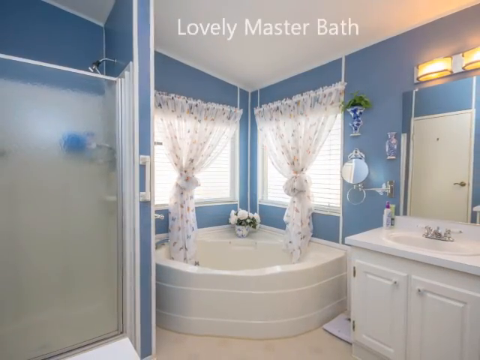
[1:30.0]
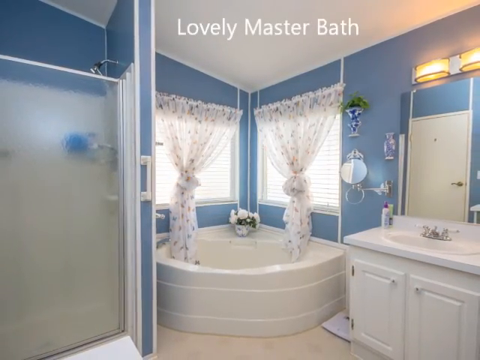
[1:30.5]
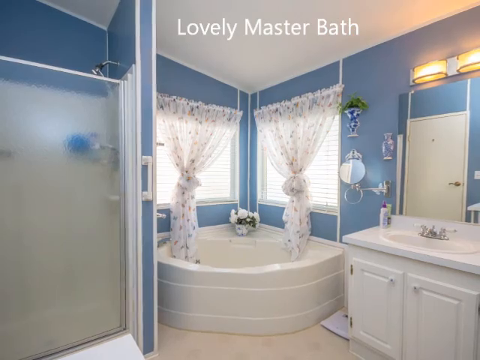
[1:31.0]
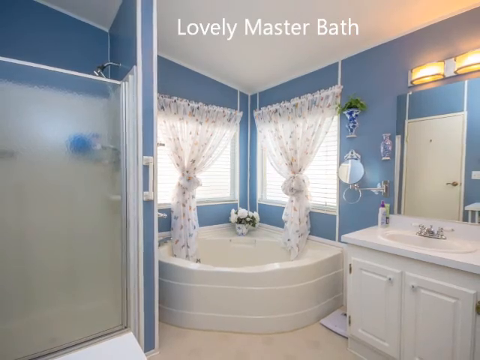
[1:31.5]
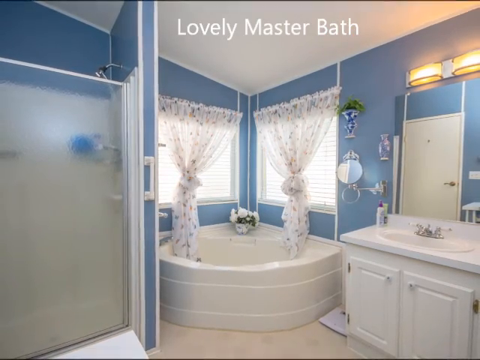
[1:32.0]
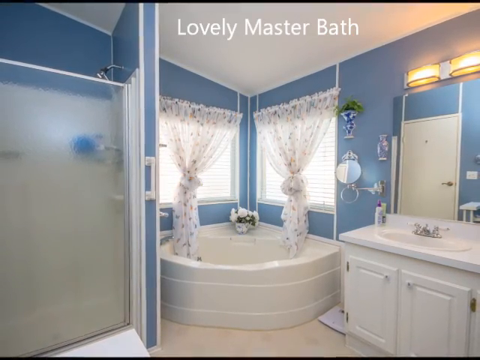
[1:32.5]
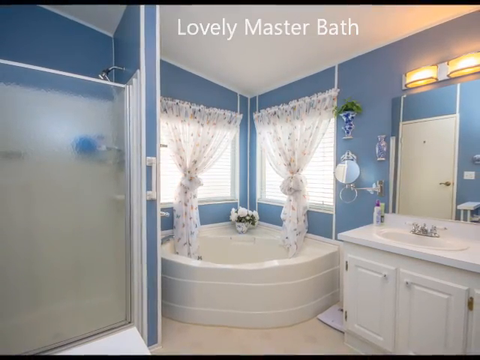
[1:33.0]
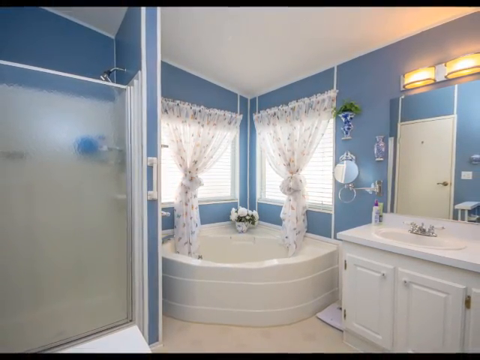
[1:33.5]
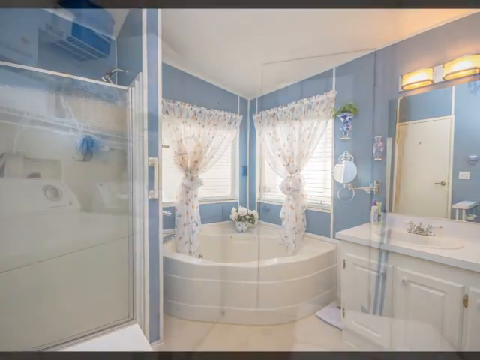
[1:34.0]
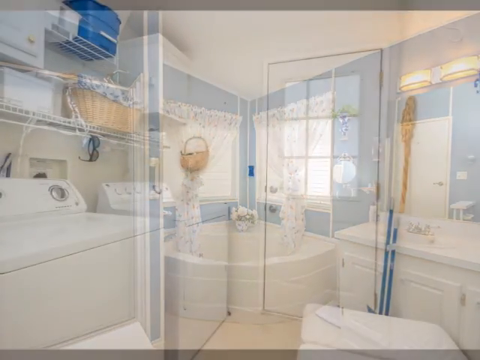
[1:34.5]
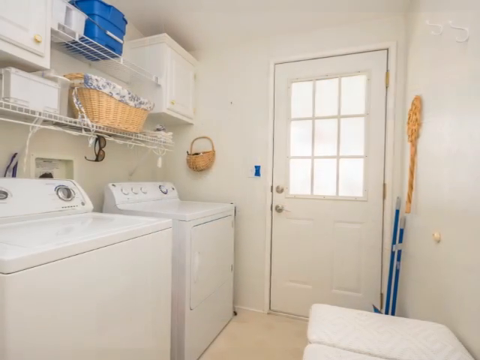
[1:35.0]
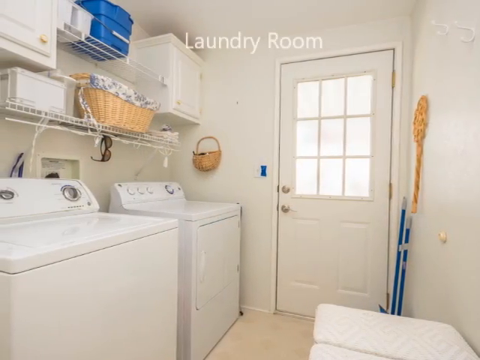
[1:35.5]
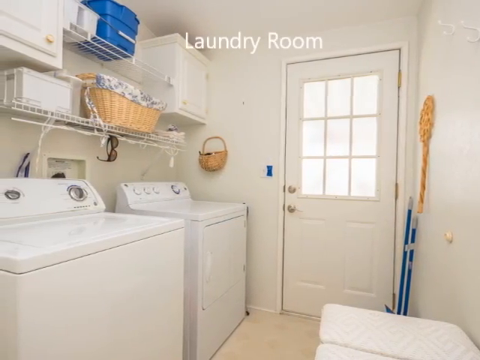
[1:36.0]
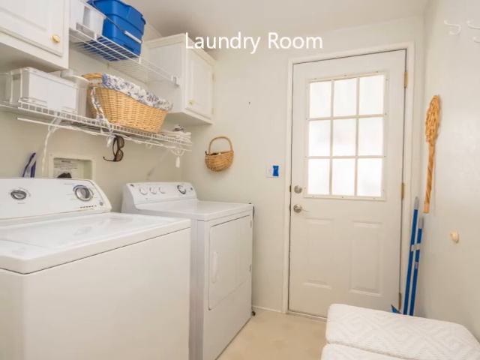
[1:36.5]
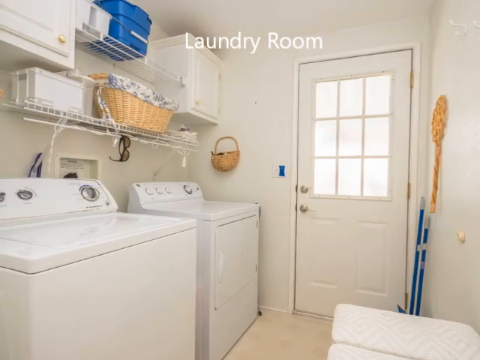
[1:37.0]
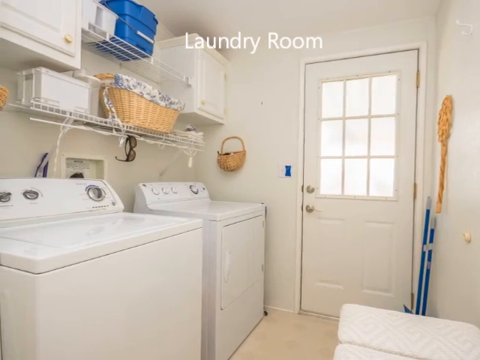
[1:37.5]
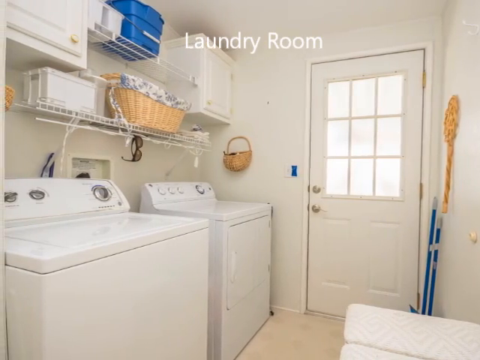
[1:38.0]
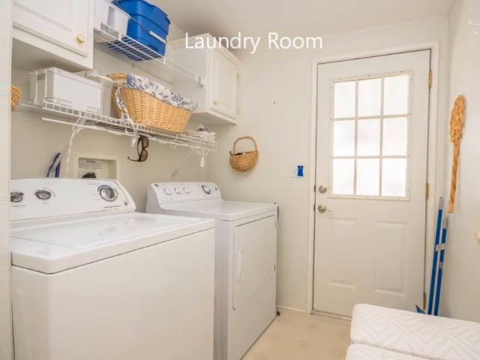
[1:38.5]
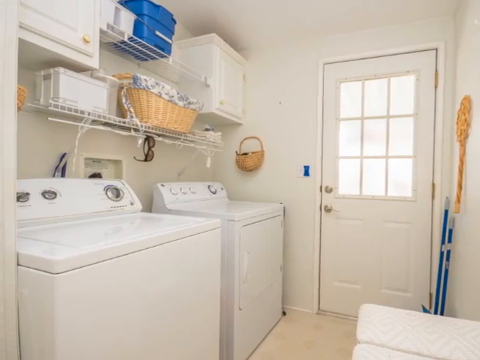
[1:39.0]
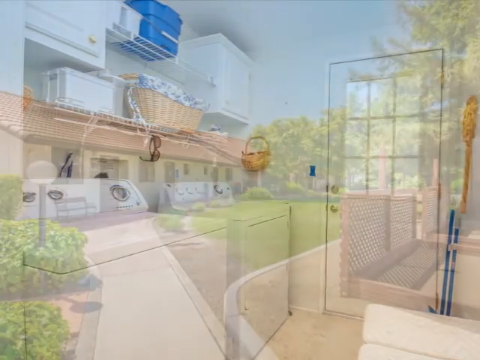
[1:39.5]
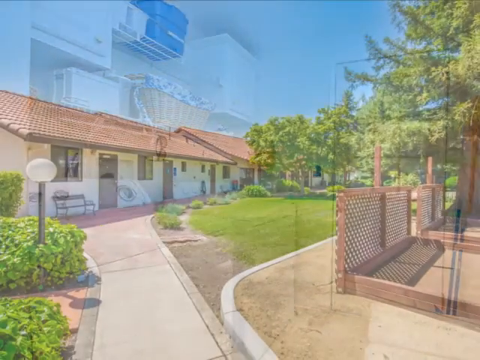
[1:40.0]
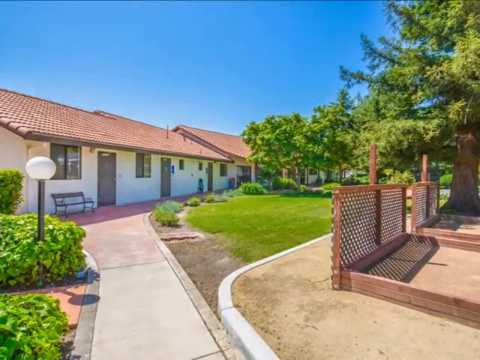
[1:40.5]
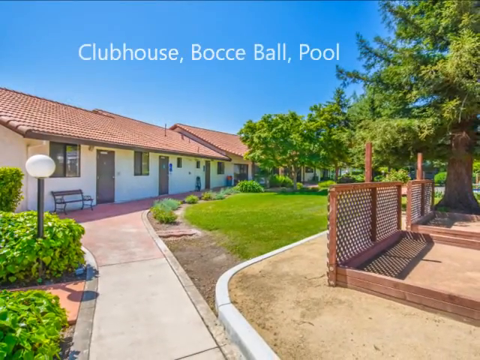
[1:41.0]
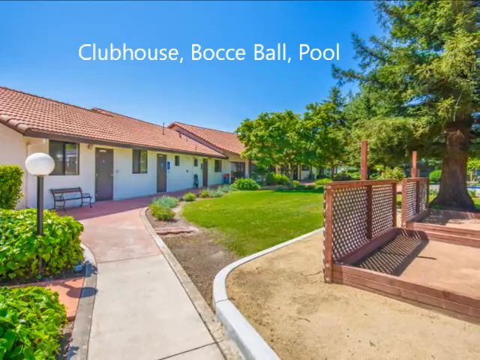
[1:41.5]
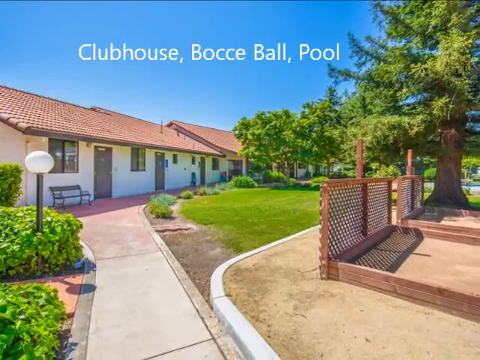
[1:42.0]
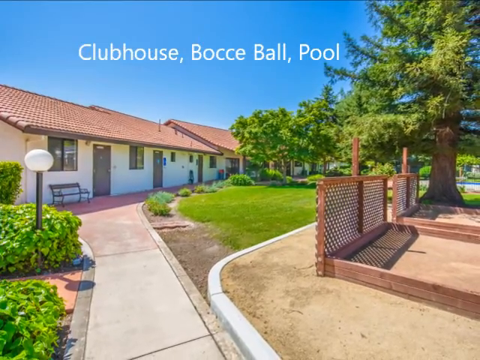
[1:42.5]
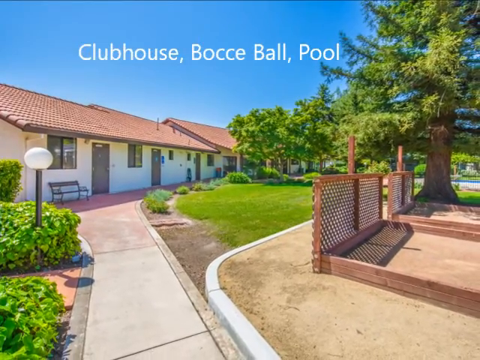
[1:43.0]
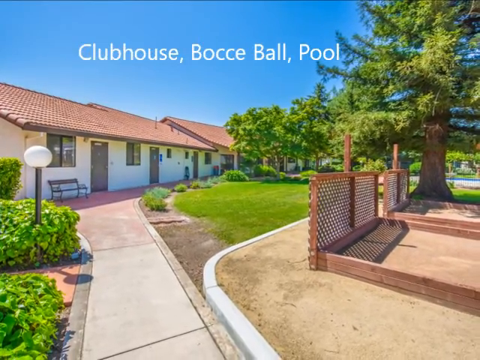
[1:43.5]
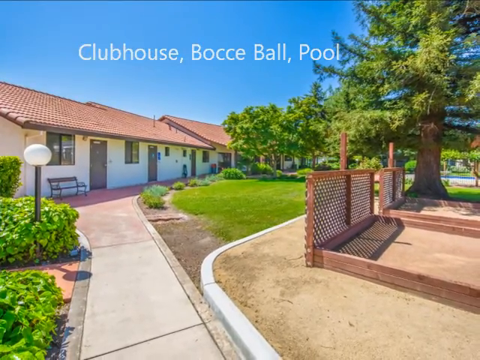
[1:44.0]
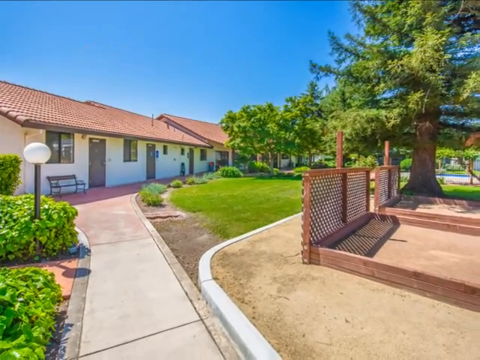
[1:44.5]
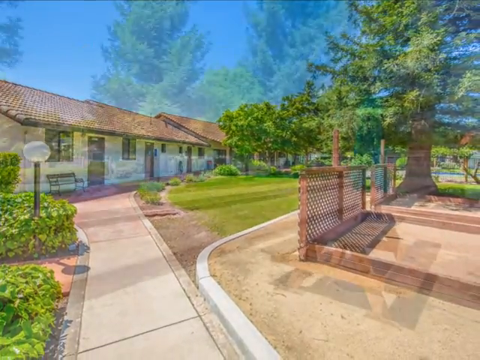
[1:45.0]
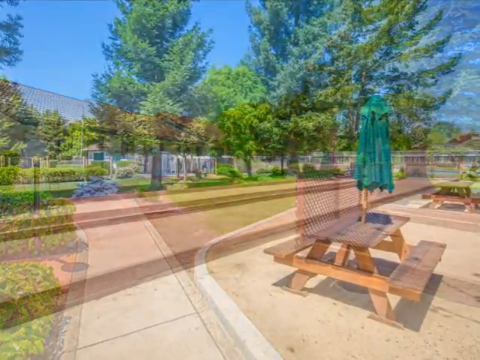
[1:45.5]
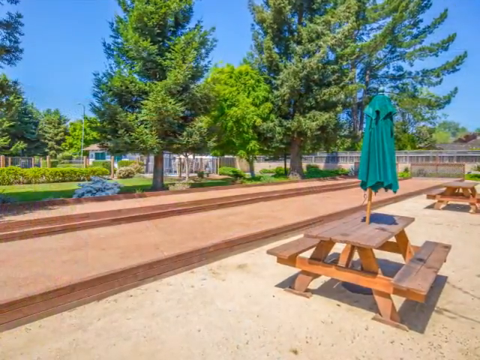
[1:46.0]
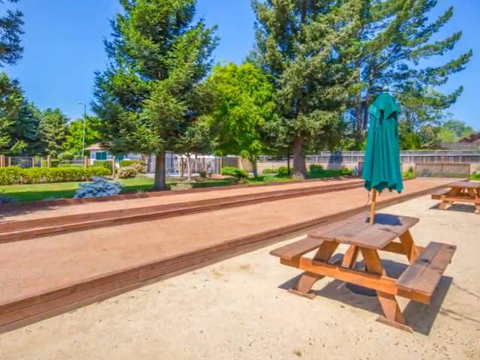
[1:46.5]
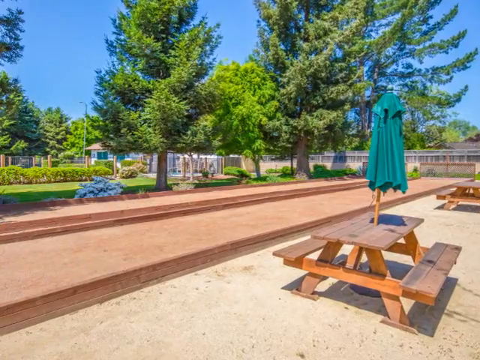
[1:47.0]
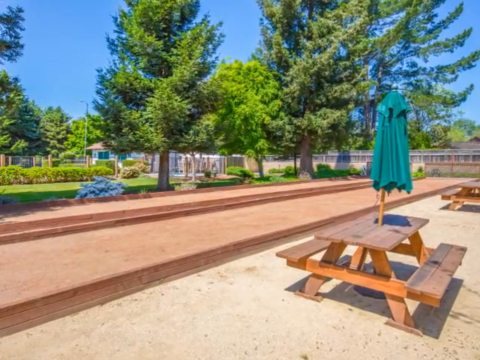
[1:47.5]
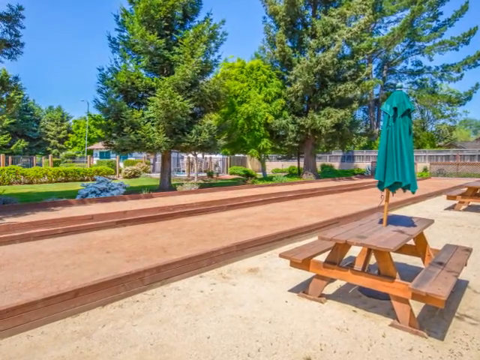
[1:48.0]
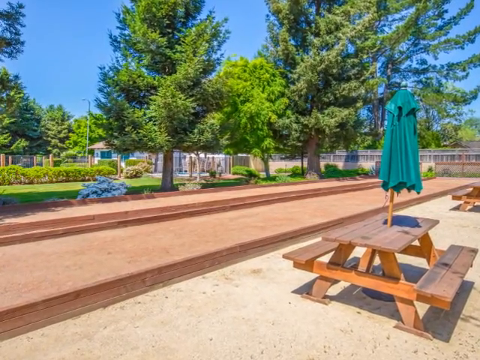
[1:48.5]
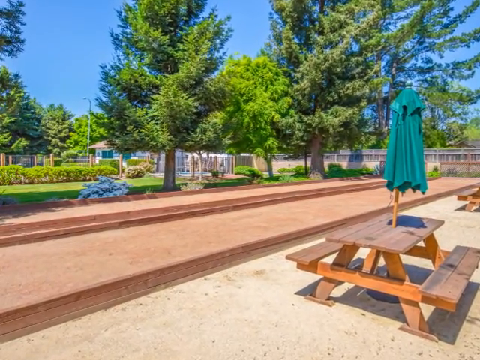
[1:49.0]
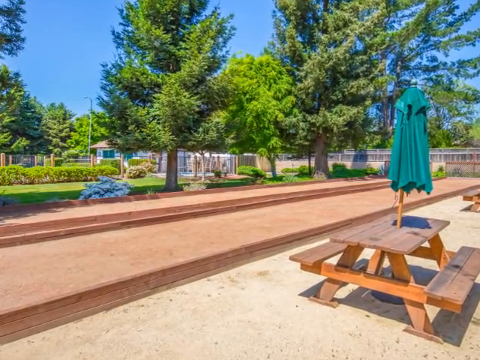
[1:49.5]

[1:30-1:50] The view continues in the master bathroom with light blue walls and a corner tub that has a window on either side. A shower is right next to this area, along with a sink. A white door on the wall is visible in the reflection of the mirror, the wall is white as well, and the ceiling is white. The view moves into a laundry room, where there appears to already be a washer and dryer, with a few cabinets above and a few shelves above that appear to be wire mesh. The view then moves outside, showing a clubhouse, a bocce ball area, and a pool area, as well as what looks like a small picnic area, followed by a tour around the building from the outside. It appears to be a gated community, a 55 plus community. At the back, by the clubhouse, it looks like ground level. The clubhouse appears to be a regular house rather than a mobile home.